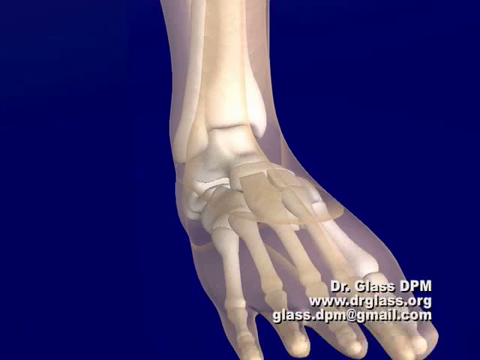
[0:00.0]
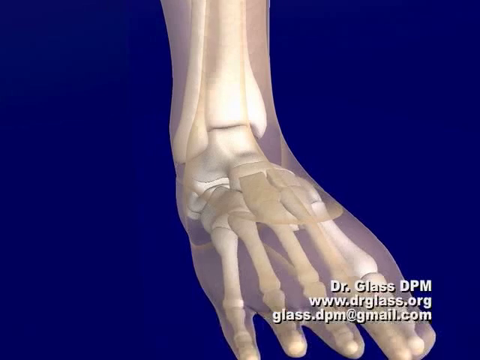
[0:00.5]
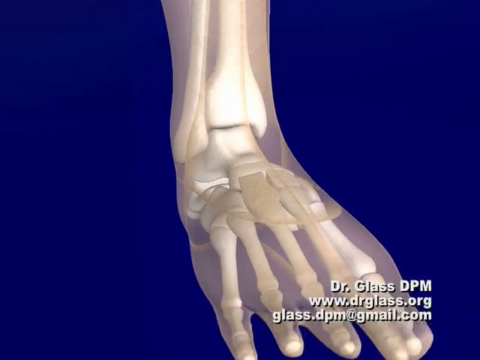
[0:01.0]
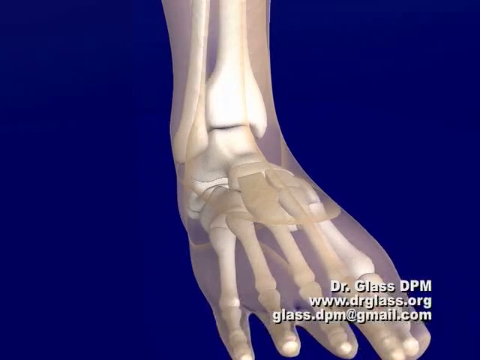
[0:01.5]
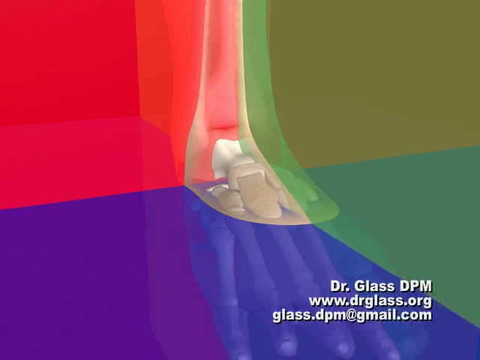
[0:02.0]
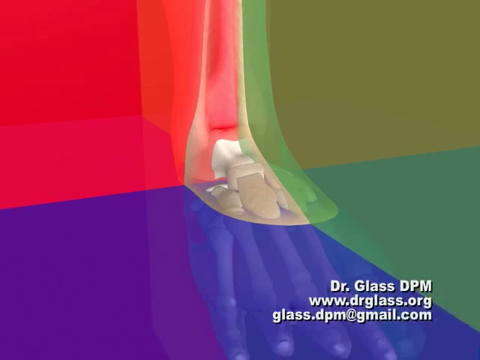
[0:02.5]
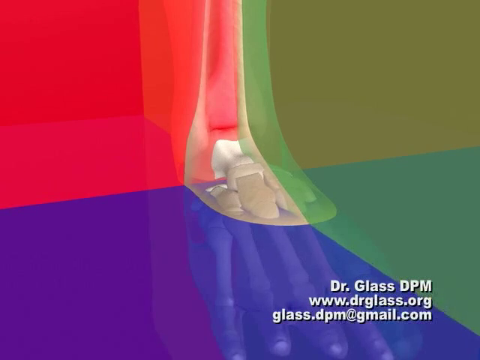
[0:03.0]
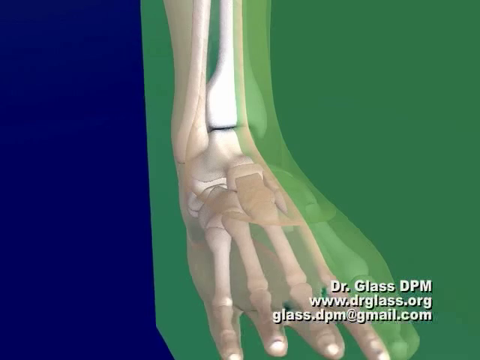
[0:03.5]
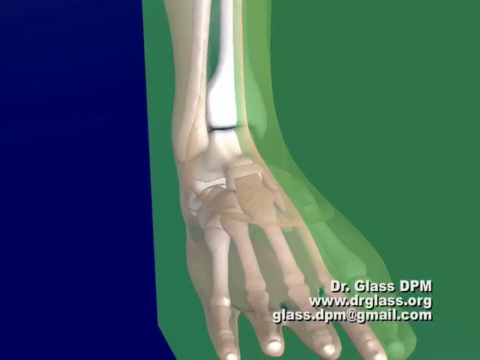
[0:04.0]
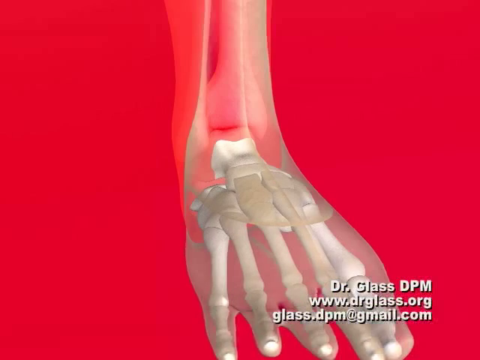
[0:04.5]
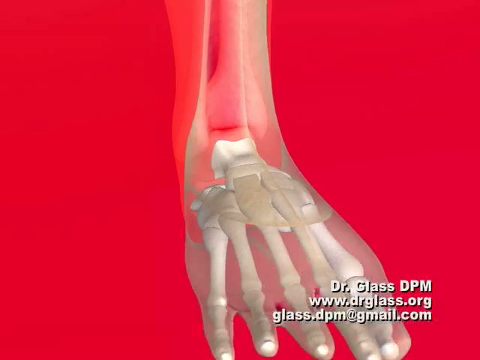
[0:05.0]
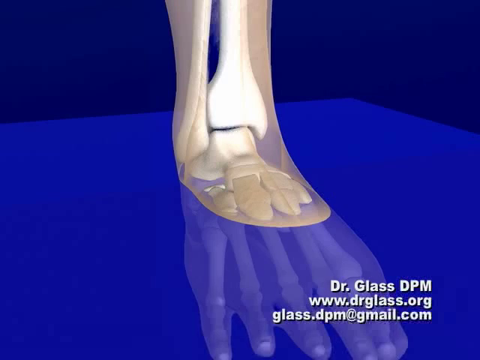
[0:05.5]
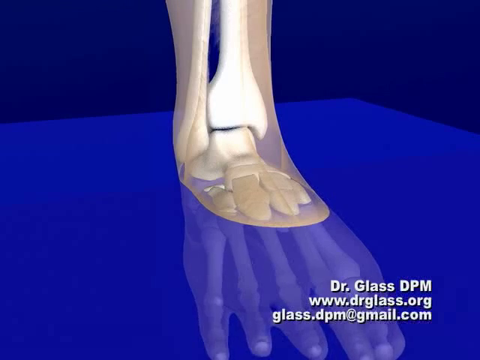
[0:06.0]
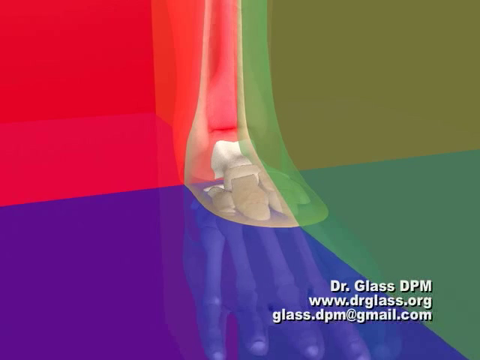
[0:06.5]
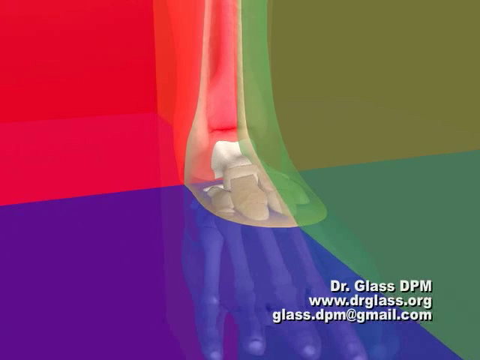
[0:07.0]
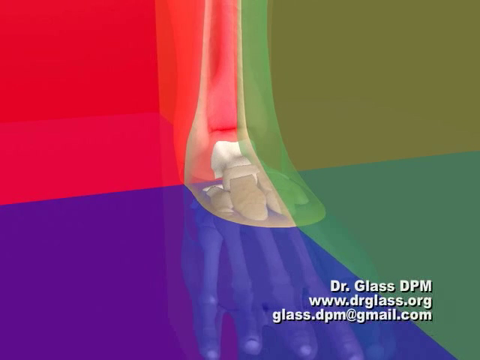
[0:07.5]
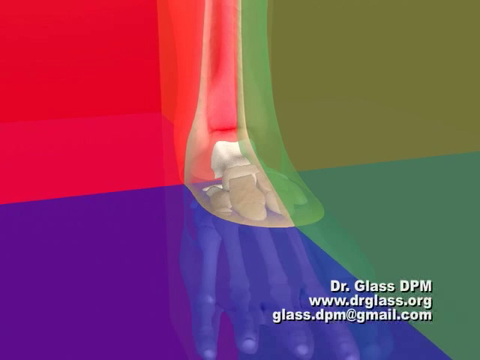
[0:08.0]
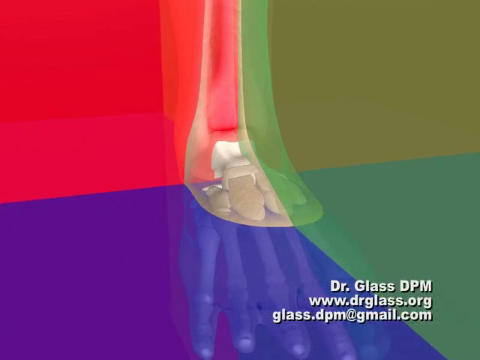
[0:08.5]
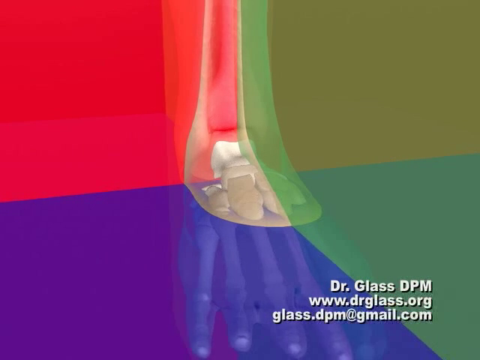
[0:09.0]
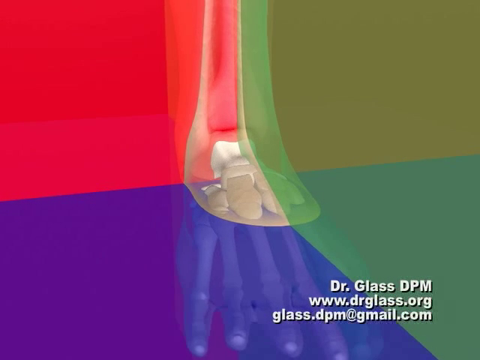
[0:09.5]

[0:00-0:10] A skeletal image of a foot is shown, with the toes visible and the leg see-through. The name Dr. Glass DPM appears, along with the website www.drglass.org and an email address, glass.dpm at gmail.com. The background is bright red, then changes to purple, and then becomes multicolored. The foot rotates very slowly, revealing different parts of it, and at one point the toes are shaded out with purple and green. Only the ankle up is visible. The intricate connections between the toes and the rest of the foot can be seen, and at this point it almost does not look like a human foot; there is no indication of whether it belongs to a human or an animal. The view goes right through to the bone, showing how the ankle bone connects to the leg bone and how the toes connect to the foot.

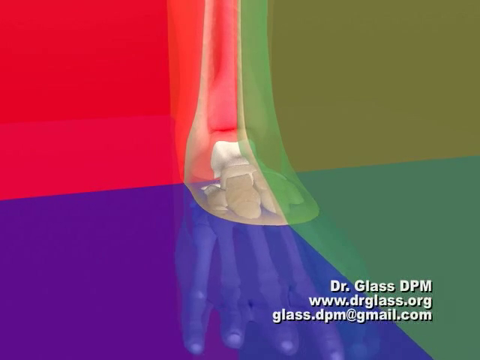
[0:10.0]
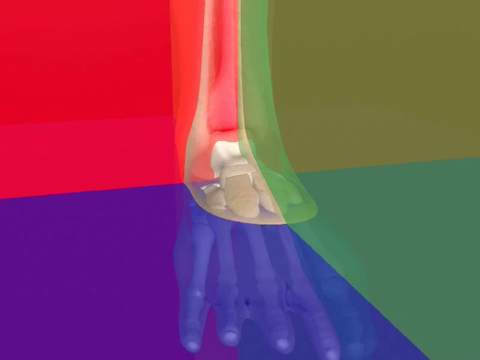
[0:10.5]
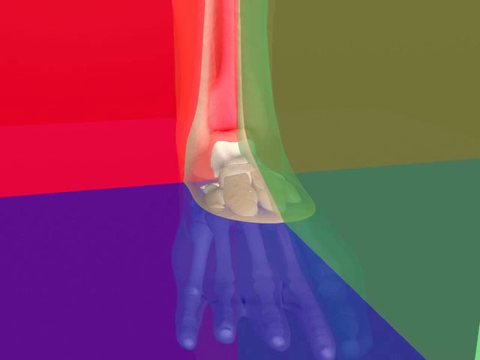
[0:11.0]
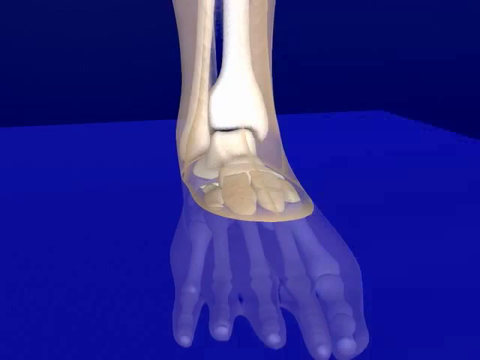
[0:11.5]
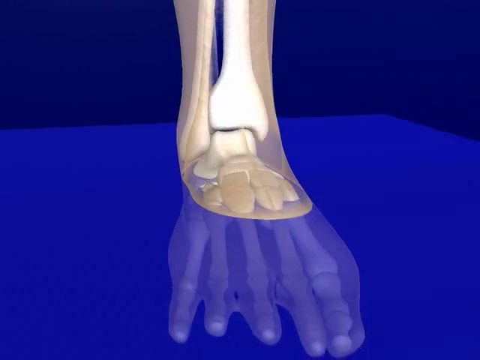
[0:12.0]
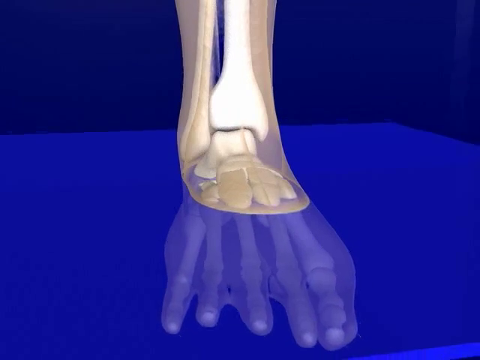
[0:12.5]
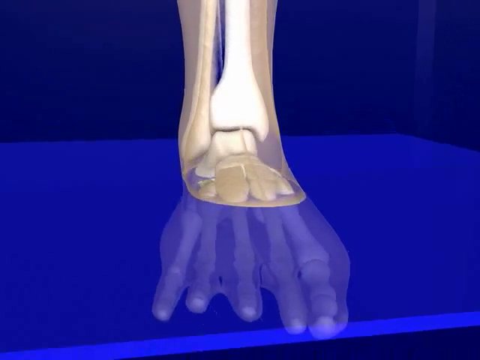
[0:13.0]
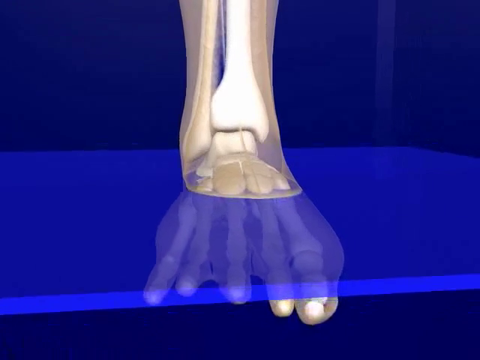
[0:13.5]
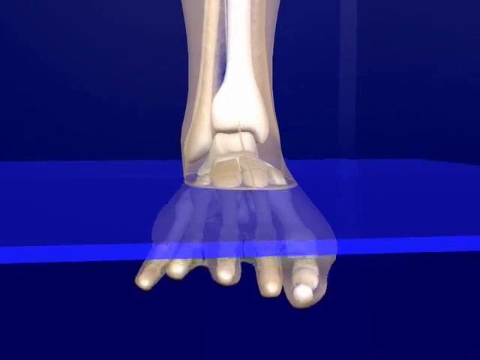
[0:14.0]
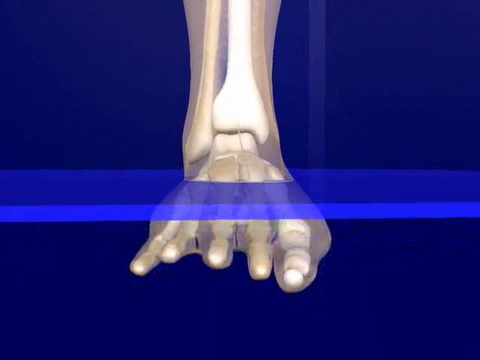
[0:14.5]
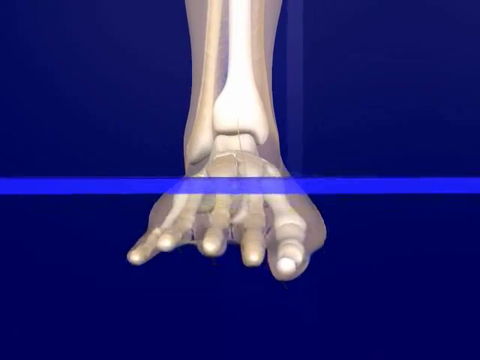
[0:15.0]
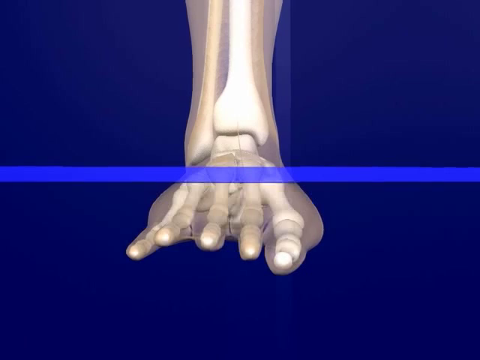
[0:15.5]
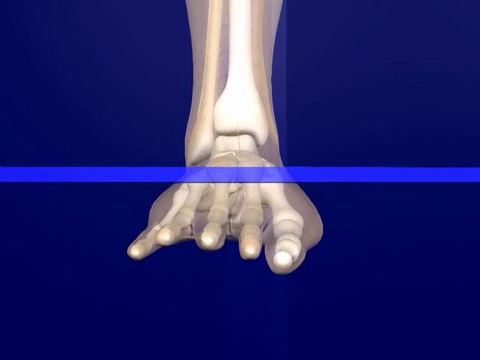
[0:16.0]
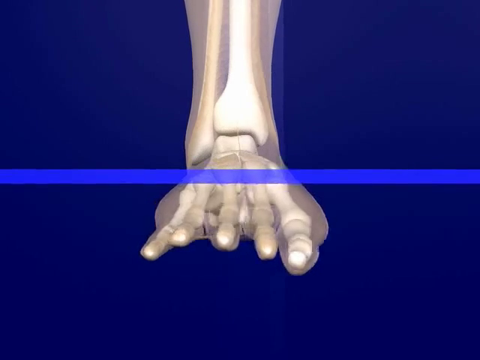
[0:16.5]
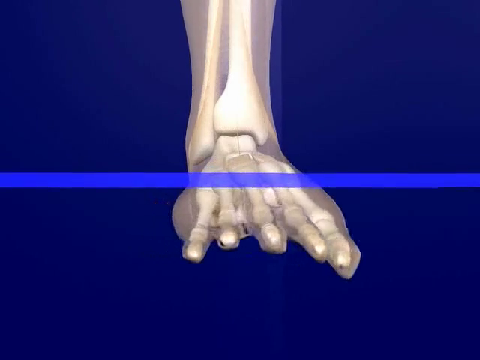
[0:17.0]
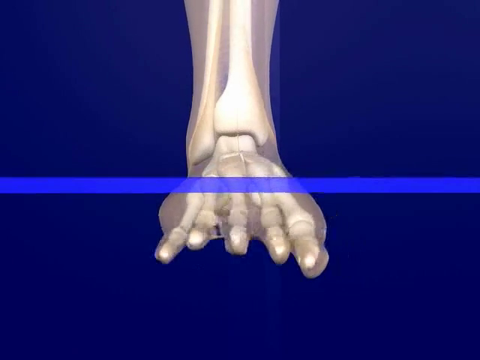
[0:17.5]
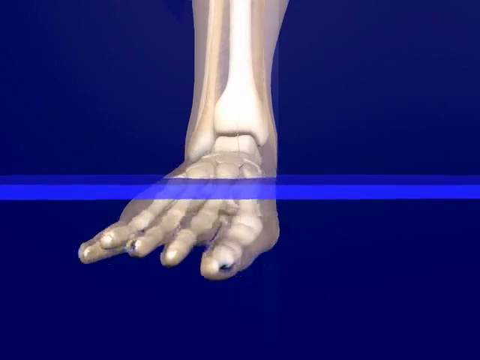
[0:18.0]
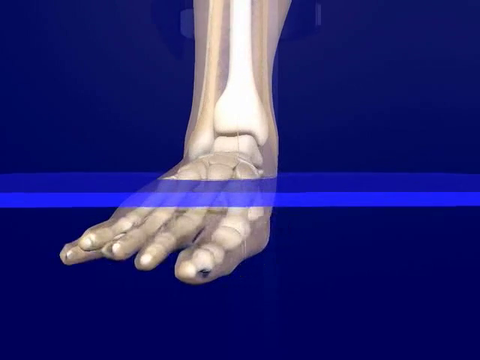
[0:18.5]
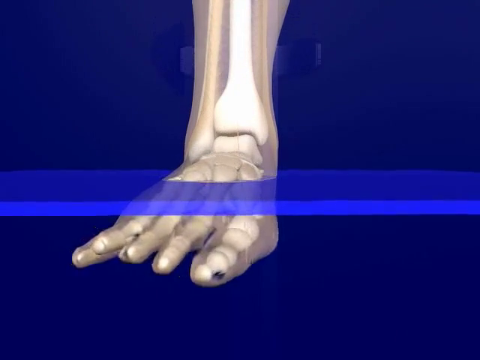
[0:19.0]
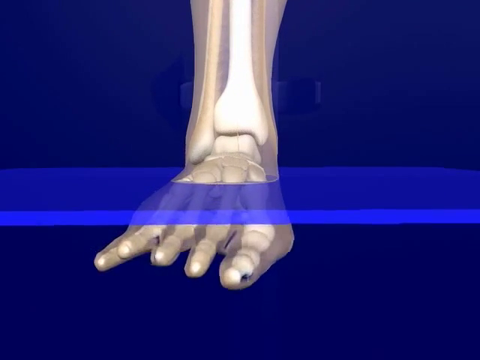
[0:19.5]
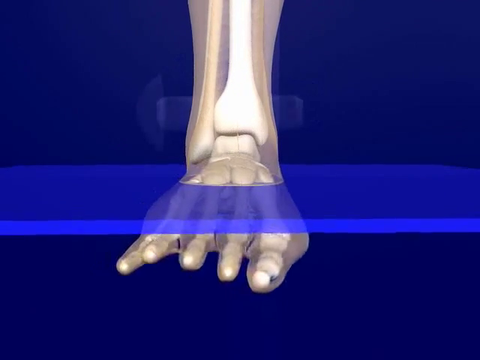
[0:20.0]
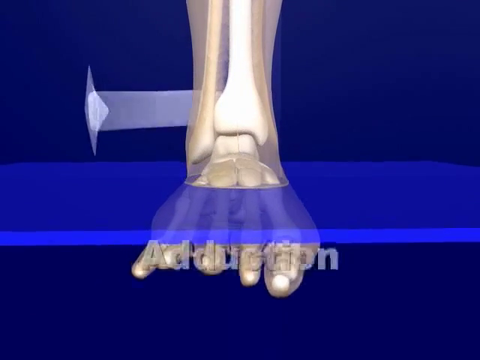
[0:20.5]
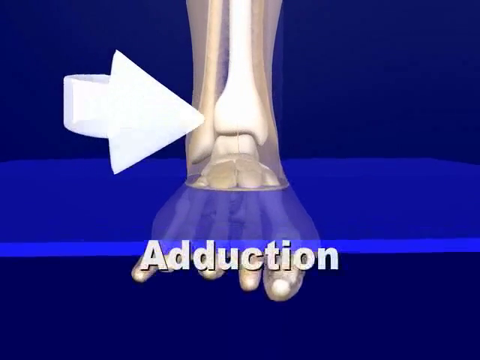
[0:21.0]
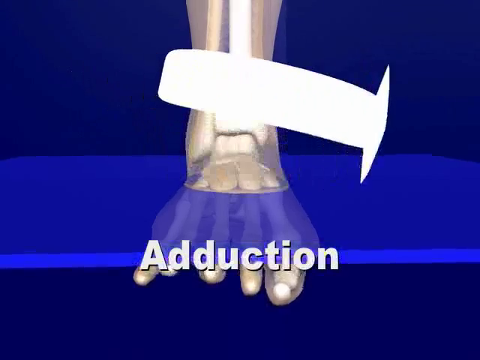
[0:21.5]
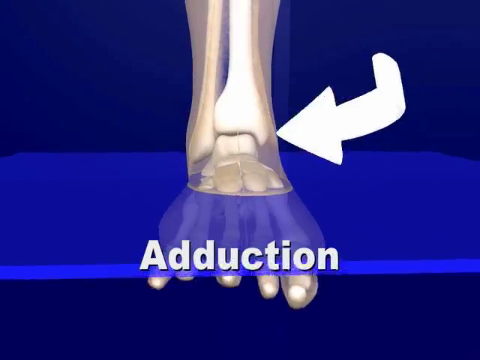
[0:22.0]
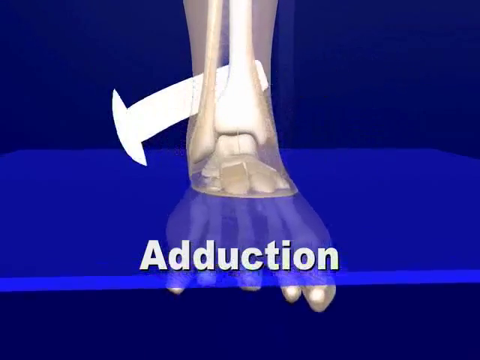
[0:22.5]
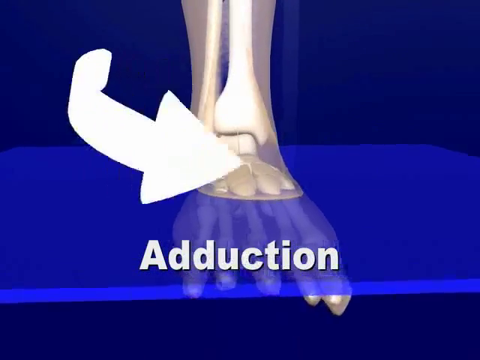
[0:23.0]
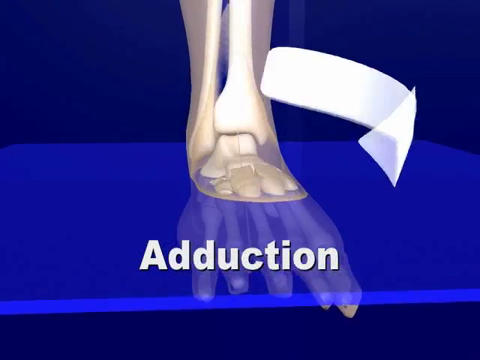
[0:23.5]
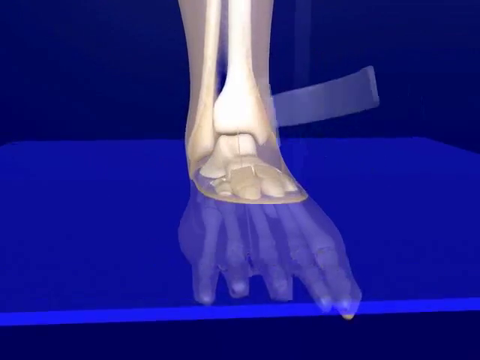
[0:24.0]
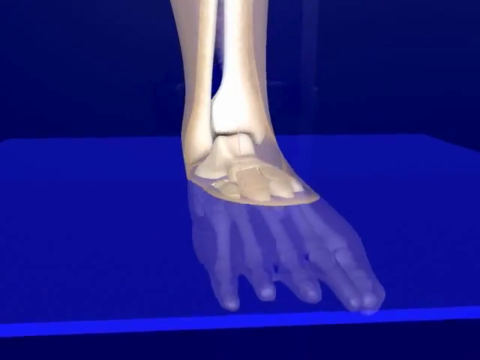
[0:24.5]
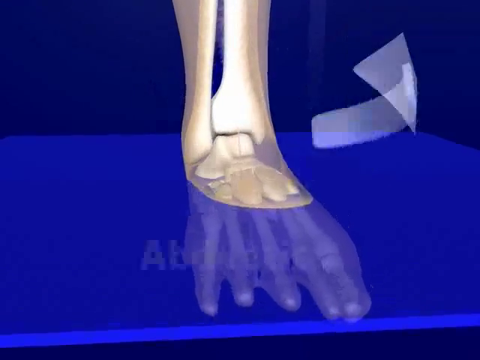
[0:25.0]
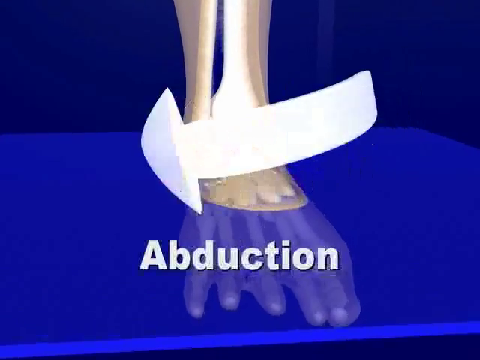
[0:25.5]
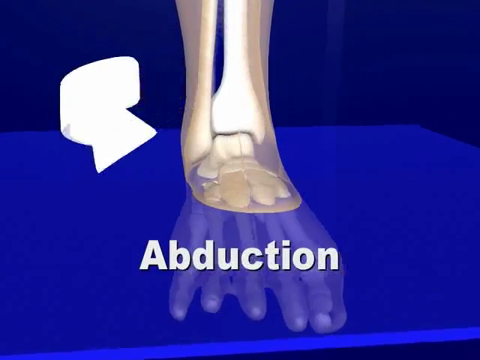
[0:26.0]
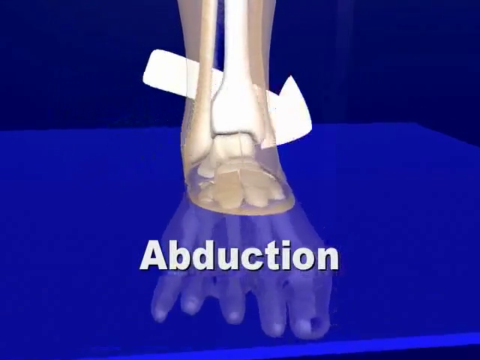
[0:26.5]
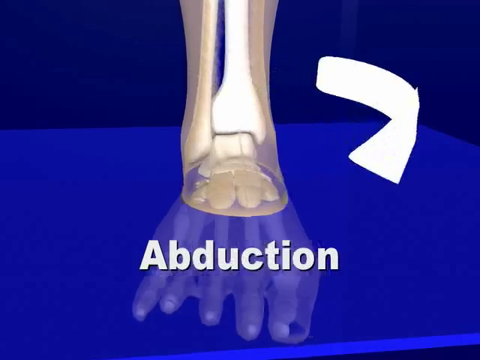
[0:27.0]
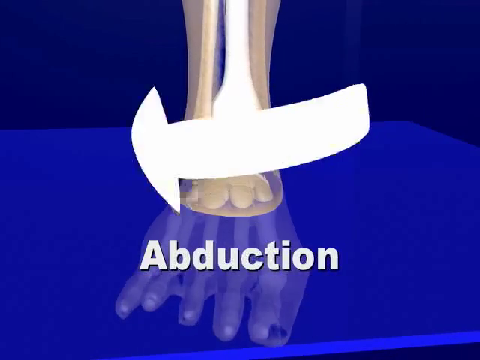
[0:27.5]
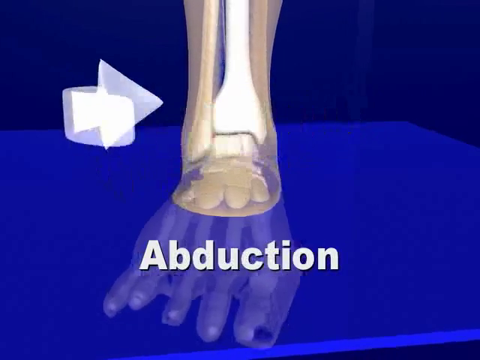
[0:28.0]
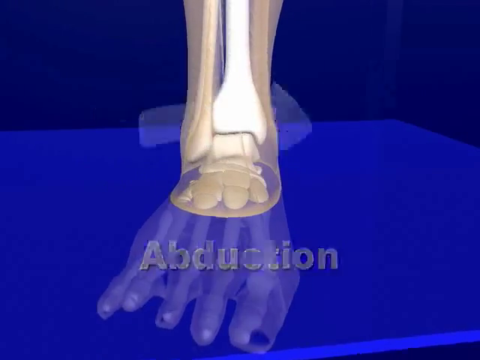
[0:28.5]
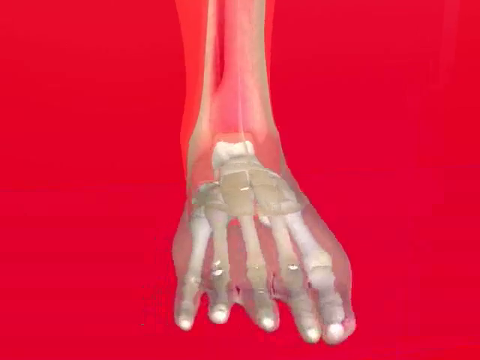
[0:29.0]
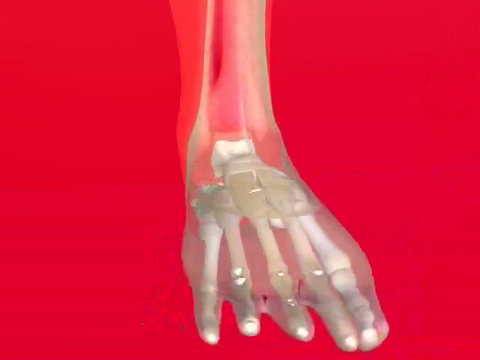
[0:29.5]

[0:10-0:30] An x-ray model of a foot shows the bones through the skin. The toes appear to be very similar in length. The word "adduction" appears, and a large, very thick white arrow moves counterclockwise. Then the word "abduction" appears, and the arrow turns around and moves clockwise, illustrating the two different ways of turning the foot in this diagram. The connection of the ankle bone to the foot and to the leg bone is visible. A purple line lifts, revealing the underneath part, and the toes become more clearly visible.